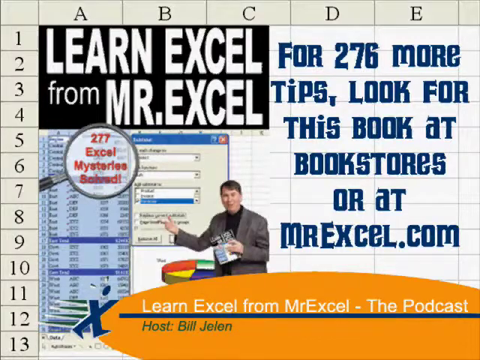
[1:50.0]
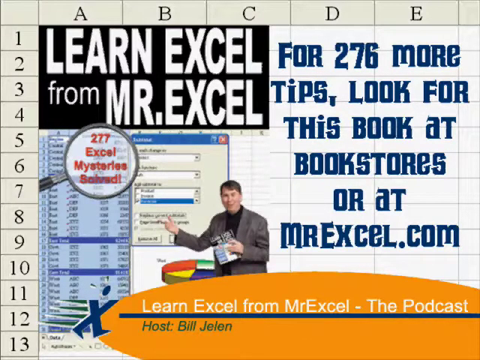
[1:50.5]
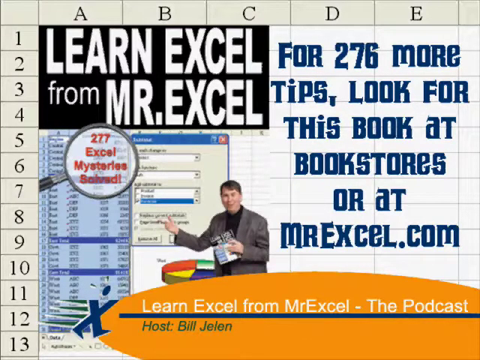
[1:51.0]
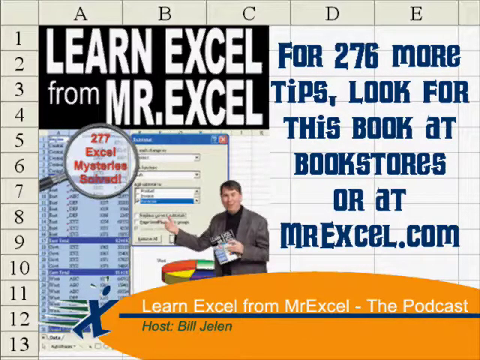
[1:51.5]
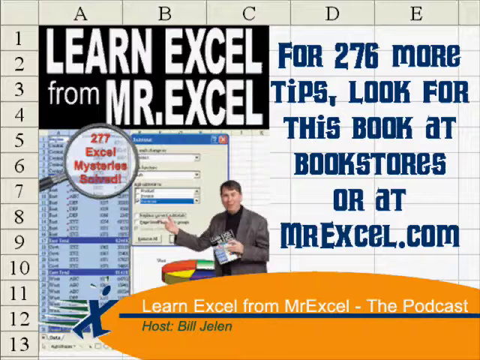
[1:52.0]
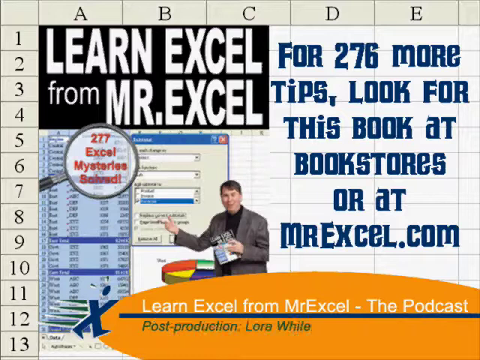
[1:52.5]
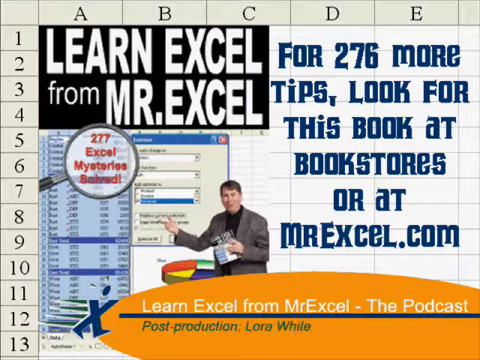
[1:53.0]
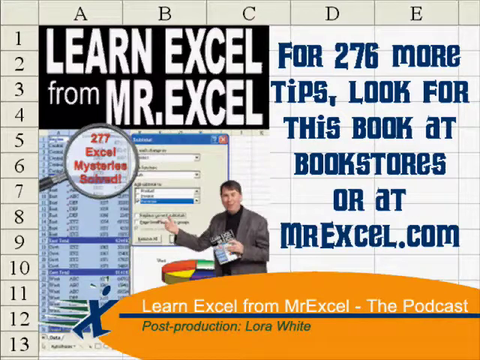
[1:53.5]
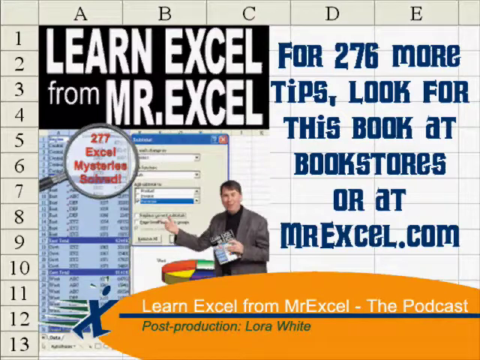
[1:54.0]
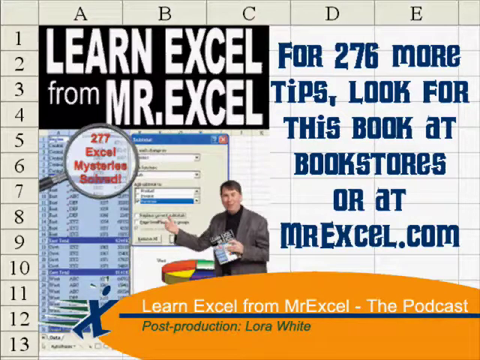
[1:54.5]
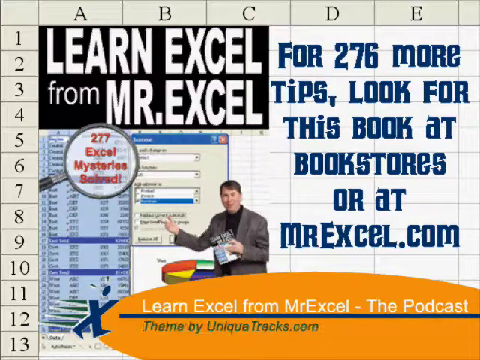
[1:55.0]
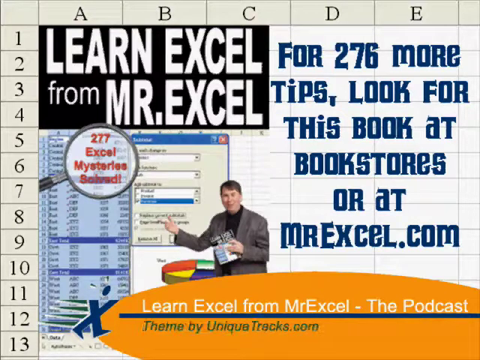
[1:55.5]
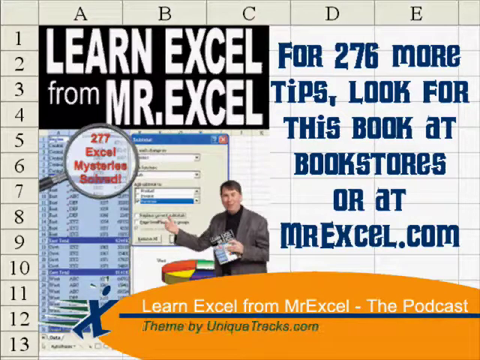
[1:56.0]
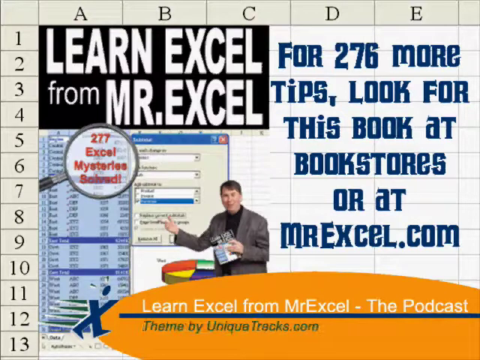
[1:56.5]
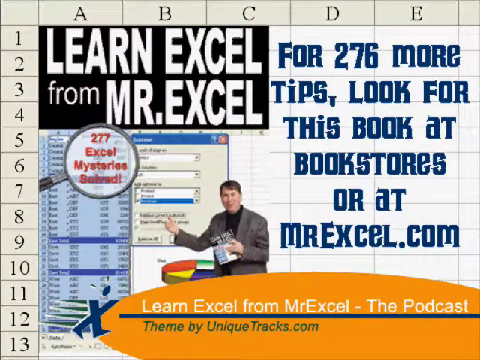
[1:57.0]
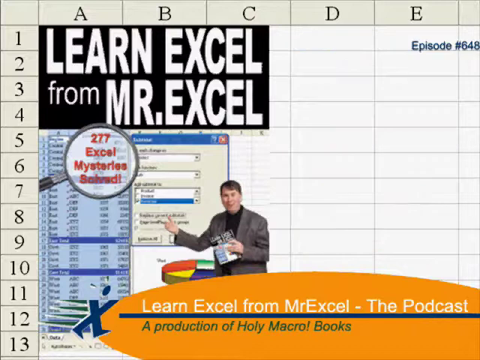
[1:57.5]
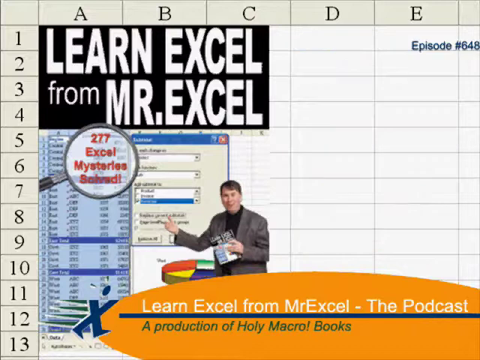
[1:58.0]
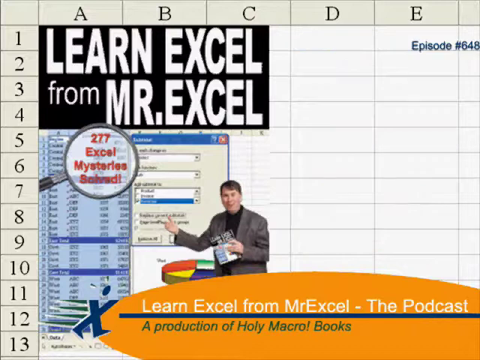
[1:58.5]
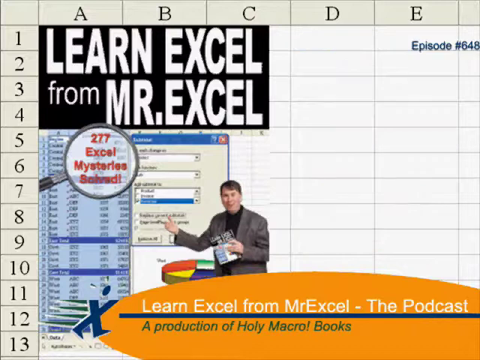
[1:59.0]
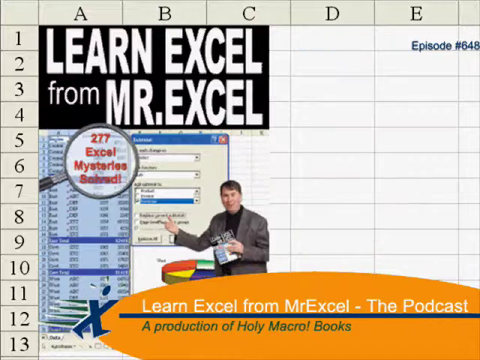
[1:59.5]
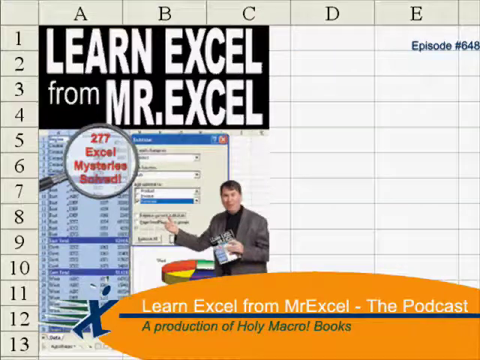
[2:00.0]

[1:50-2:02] An Excel spreadsheet shows columns A, B, C, D and E across the top and rows 1 through 13 down the side. The screen is static, with no movement. In the top left, inside a vertical rectangle with a black background, text reads "Learn Excel from Mr. Excel" in white capital letters, except for "from", which is lowercase. To the right of that, in dark blue bold print, it reads "for 276 more tips, look for this book at bookstores or at MrExcel.com". Below "Learn Excel from MrExcel", on the left, is a picture of what looks like a magnifying glass over a spreadsheet; through the magnifying glass "277" appears in red, with "Excel" below it, then "Mysteries", then "Solved!". To the right of that is a still picture of the man pointing up to something like an element of an Excel spreadsheet. At the very bottom of the screen, "Learn Excel from MrExcel - the podcast" is written in white over a background like an orange oval; underneath is a blue line, and below it the name Bill Jelen appears.